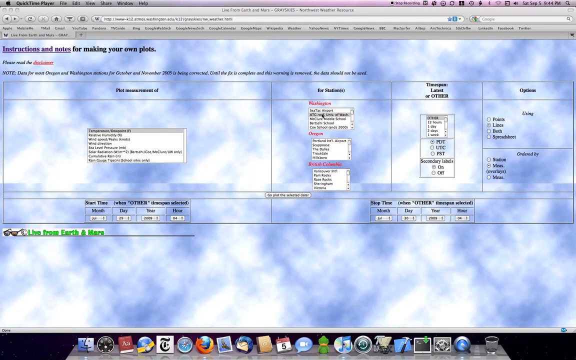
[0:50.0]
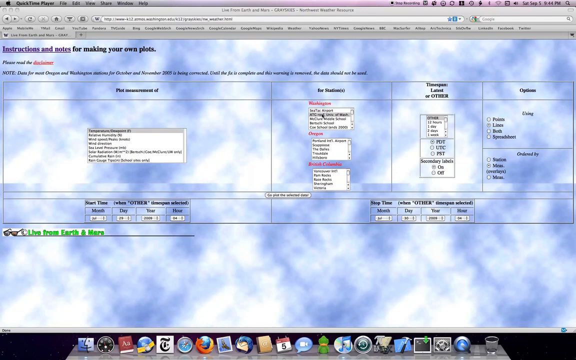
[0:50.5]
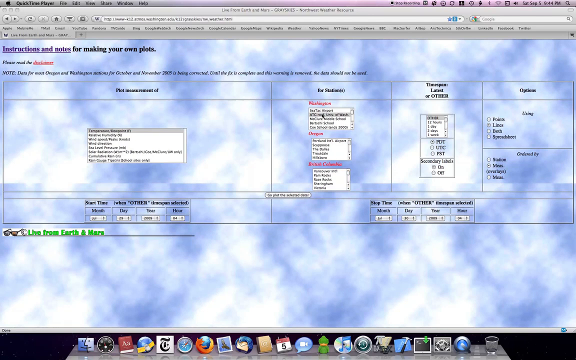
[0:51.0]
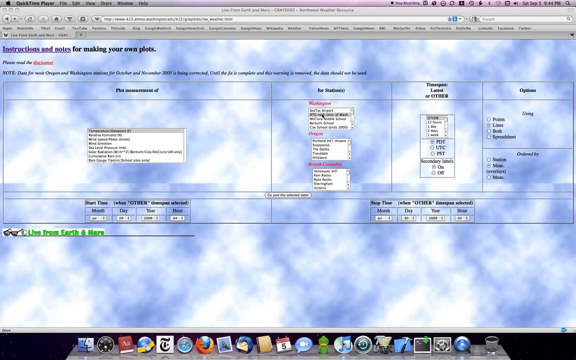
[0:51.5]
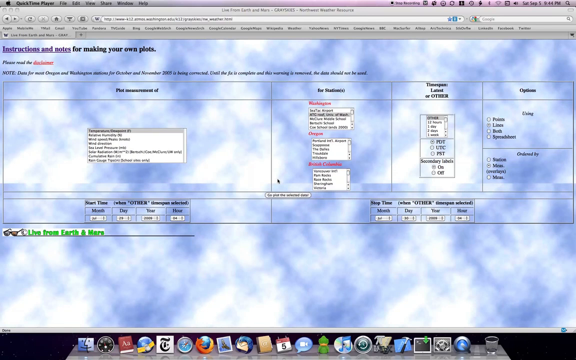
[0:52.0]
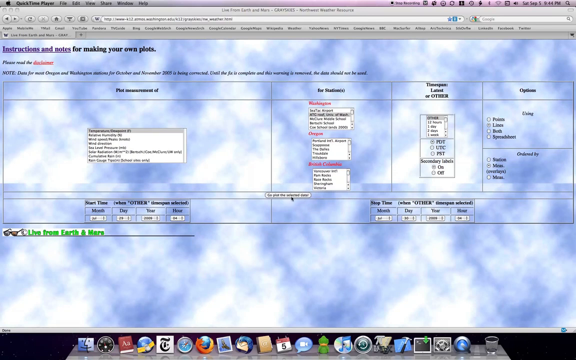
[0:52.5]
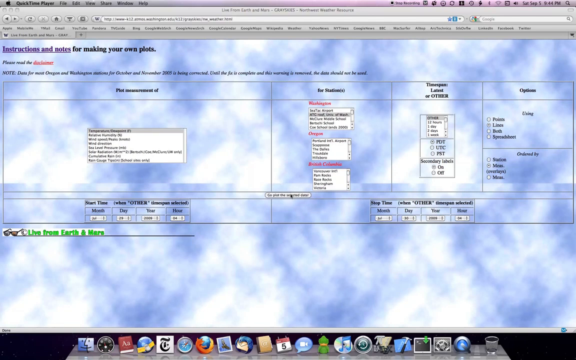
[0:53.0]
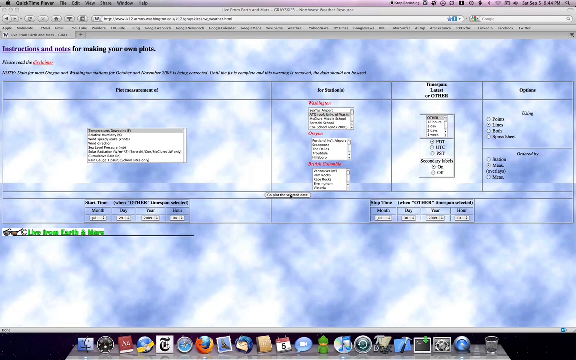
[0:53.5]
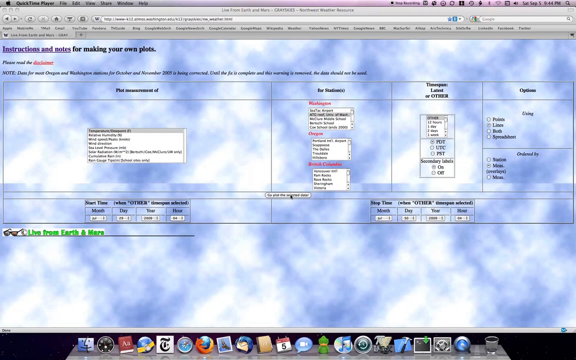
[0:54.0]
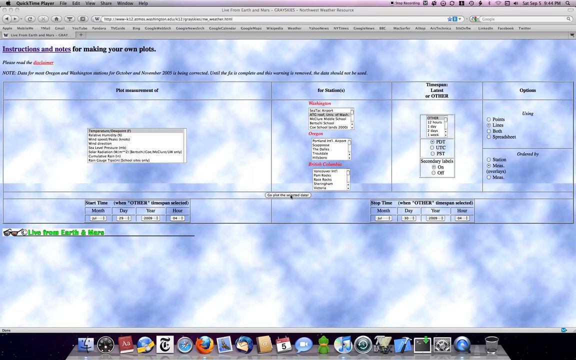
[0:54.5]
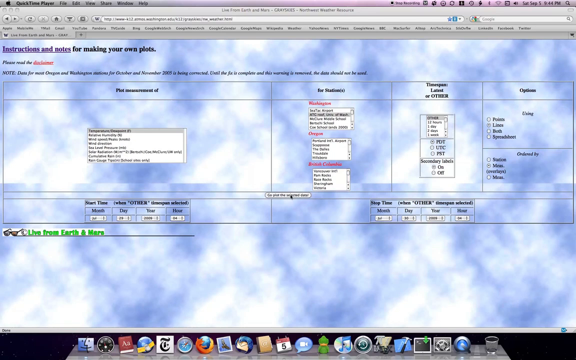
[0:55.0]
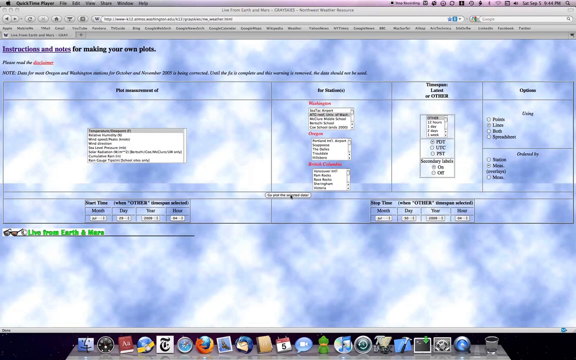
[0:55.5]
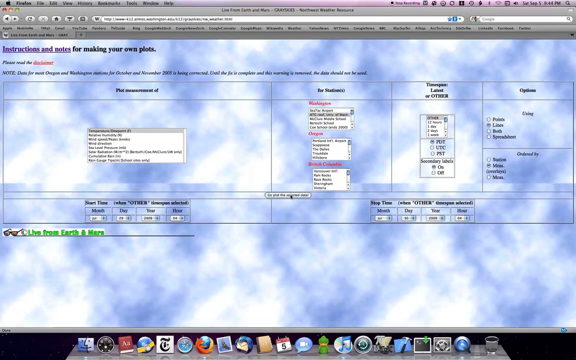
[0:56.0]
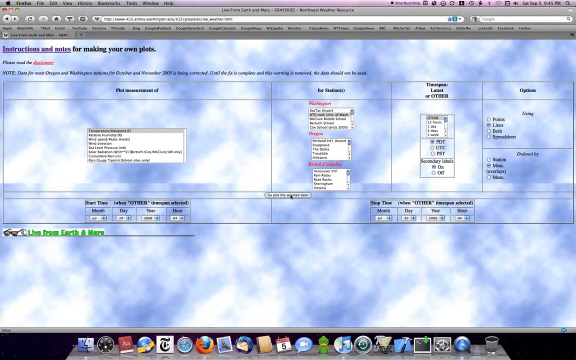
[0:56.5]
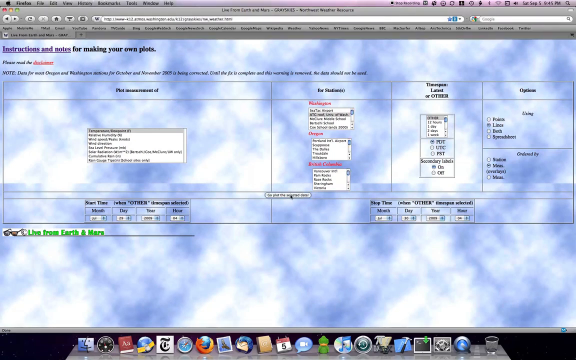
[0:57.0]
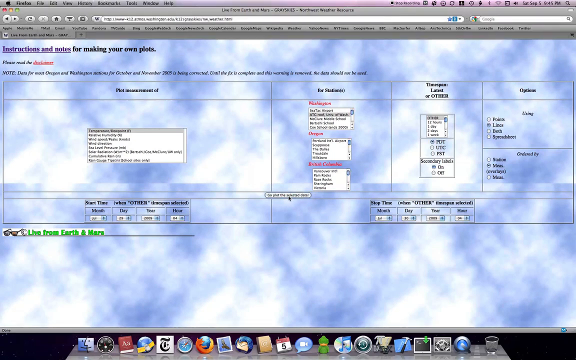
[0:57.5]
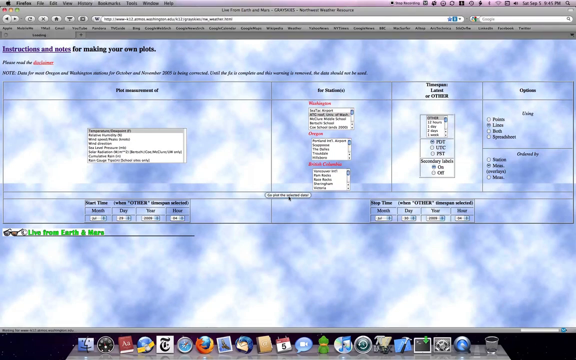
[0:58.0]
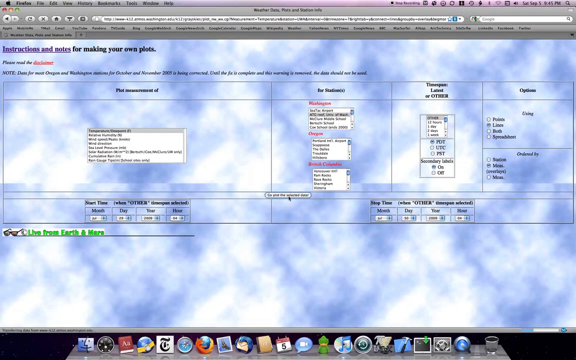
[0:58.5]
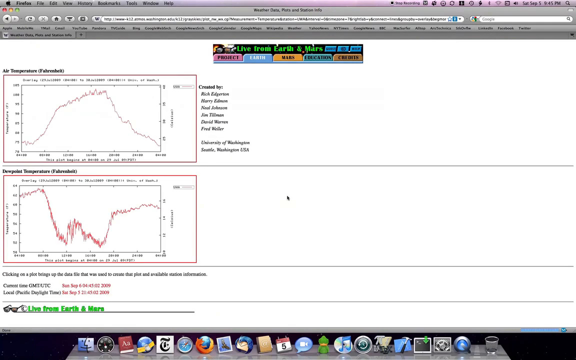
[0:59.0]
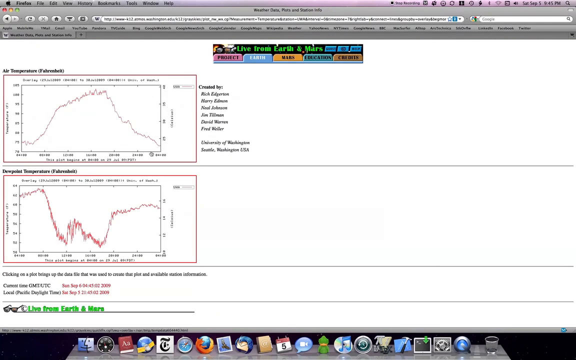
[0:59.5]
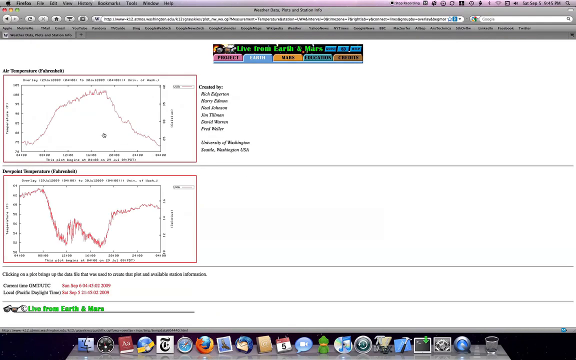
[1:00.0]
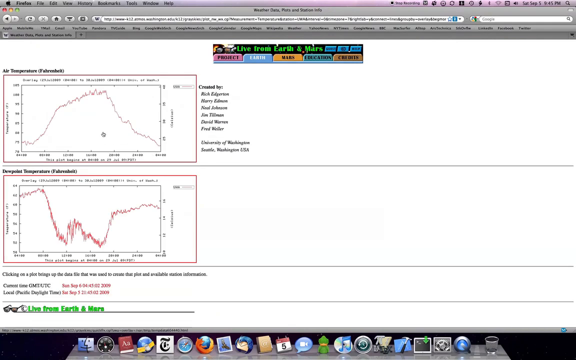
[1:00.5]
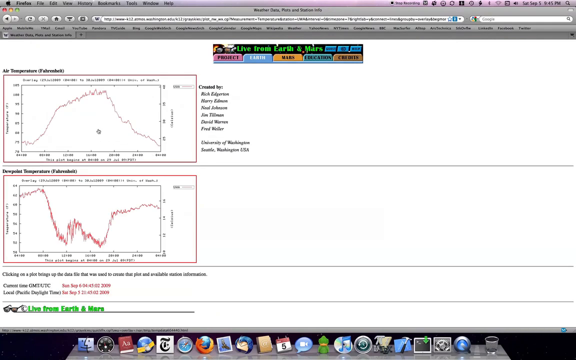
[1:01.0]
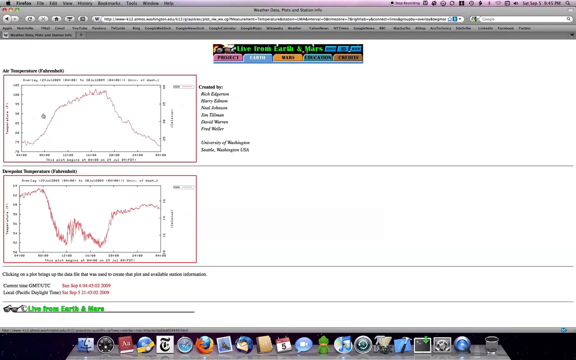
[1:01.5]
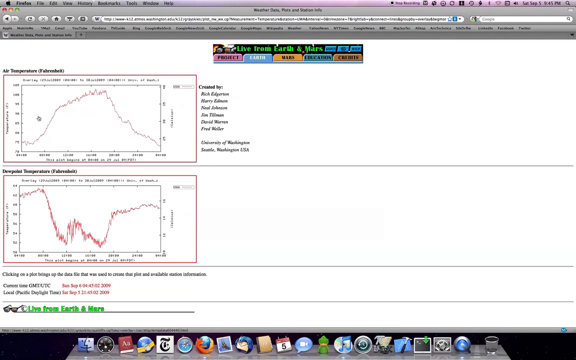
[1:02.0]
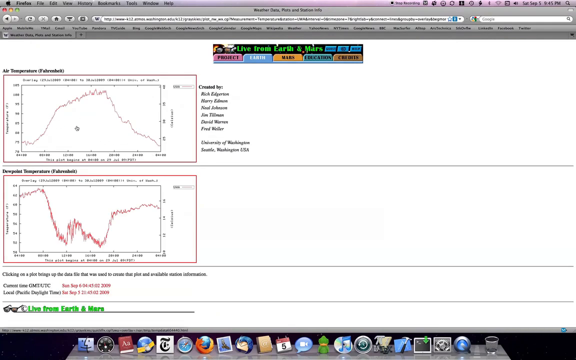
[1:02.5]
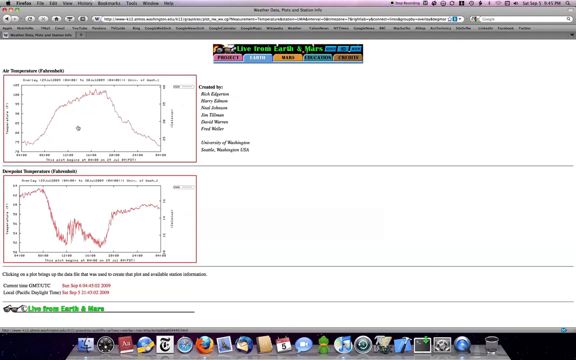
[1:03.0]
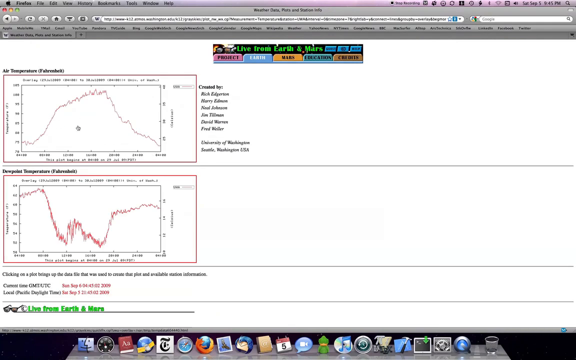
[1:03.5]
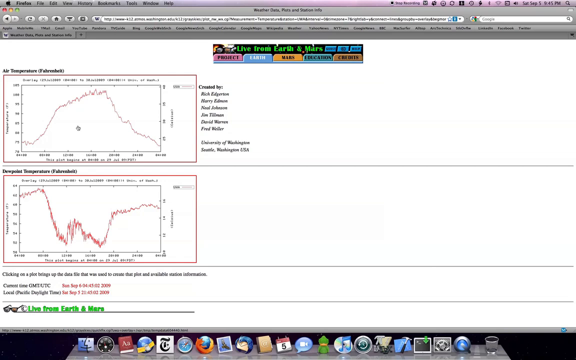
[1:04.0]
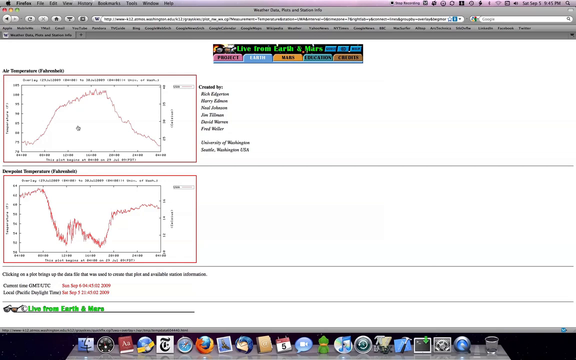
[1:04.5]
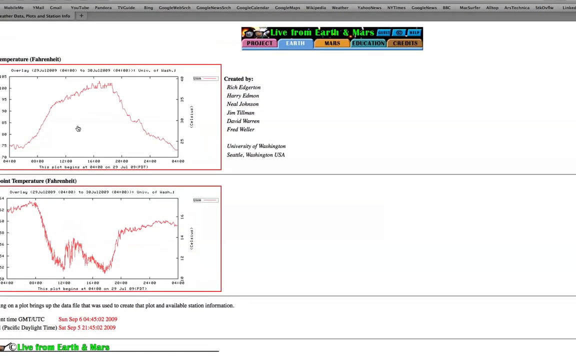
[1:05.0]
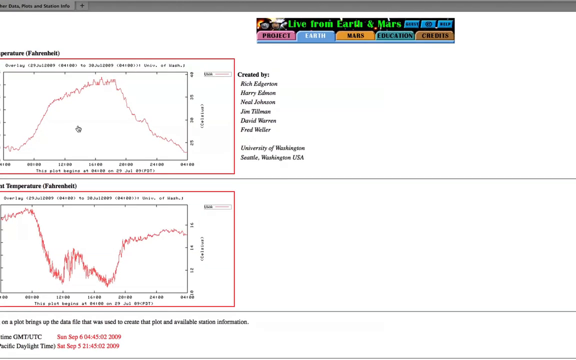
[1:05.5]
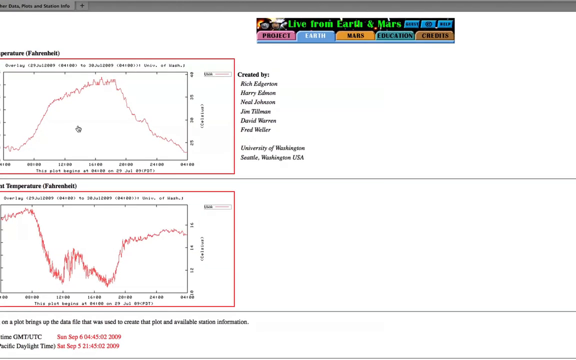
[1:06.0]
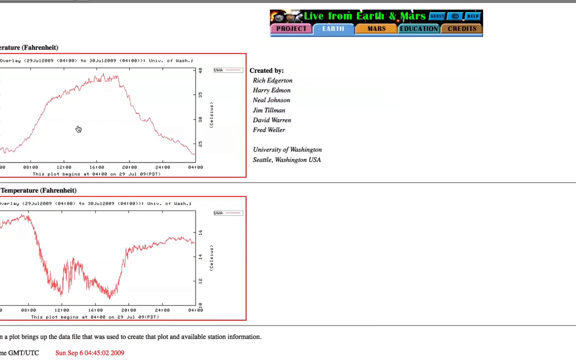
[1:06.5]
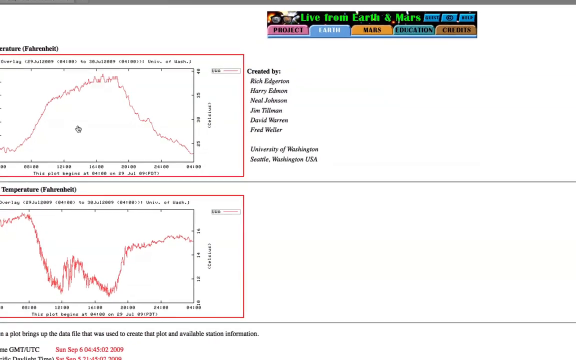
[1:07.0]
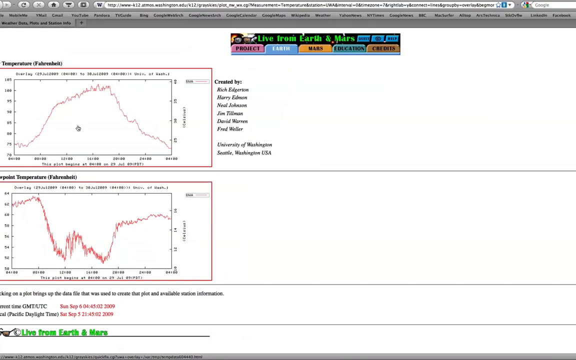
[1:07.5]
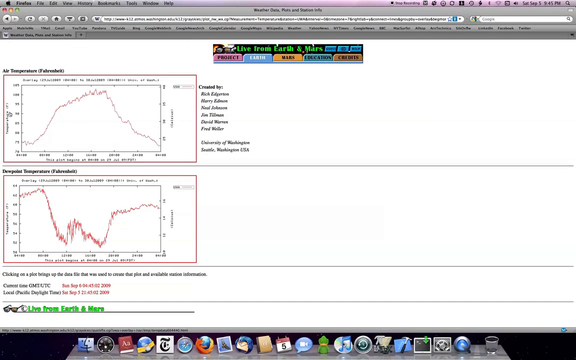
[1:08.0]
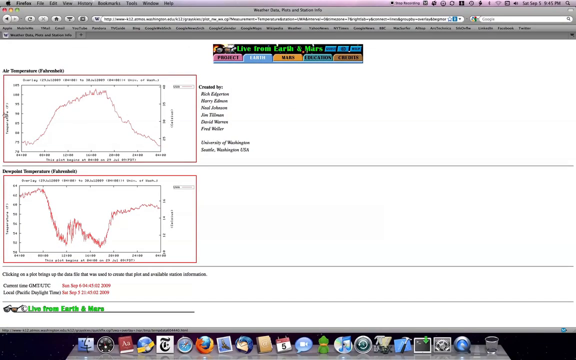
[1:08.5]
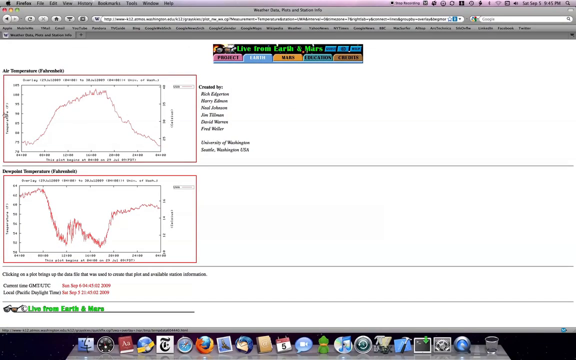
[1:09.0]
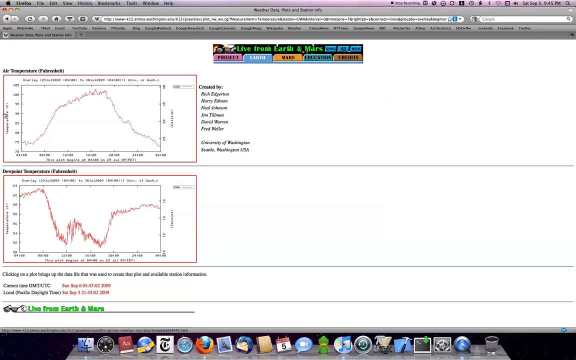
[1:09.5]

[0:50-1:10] The mouse hovers over a button in the center of the screen and clicks it, which brings up a graph of air temperature and another graph showing more temperature in Fahrenheit. One graph starts low, goes high and comes back low like a hill; the other starts high, dips, comes back up, dips and comes back up, almost like a W. Zooming in shows the graphs a little more clearly. The button that was clicked was to look at "plots and data." On the right-hand side, the graphs are credited as created by "University of Washington," with six people's names listed.